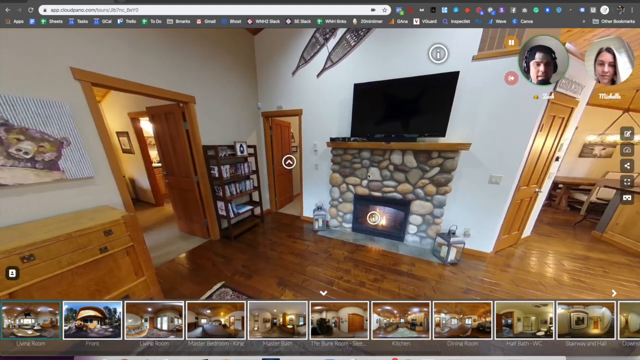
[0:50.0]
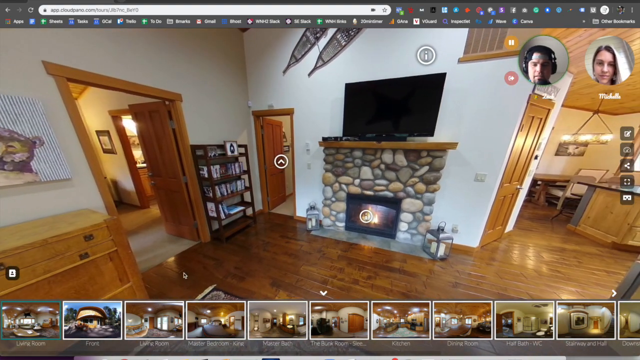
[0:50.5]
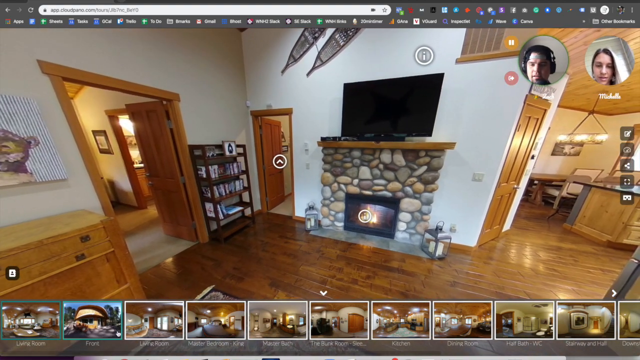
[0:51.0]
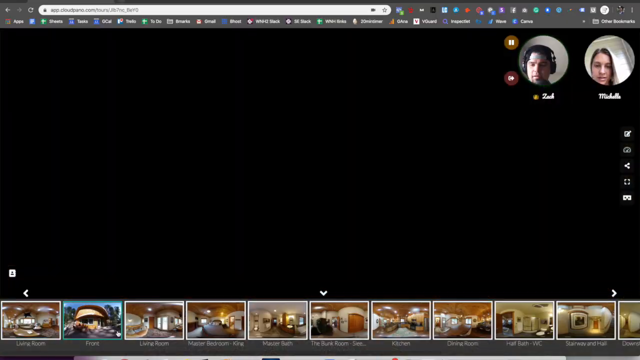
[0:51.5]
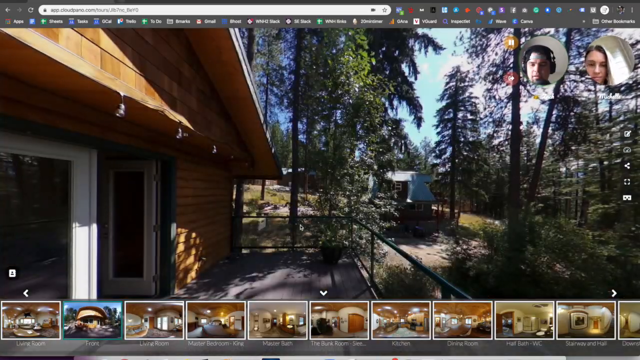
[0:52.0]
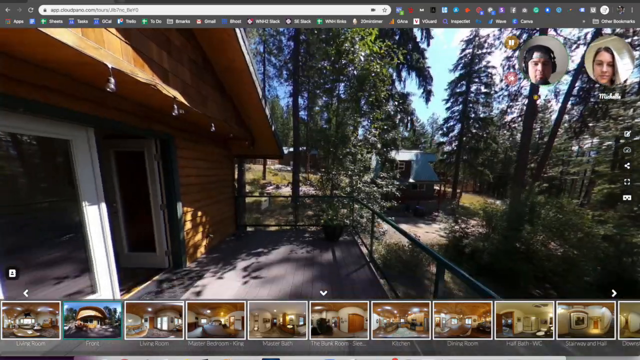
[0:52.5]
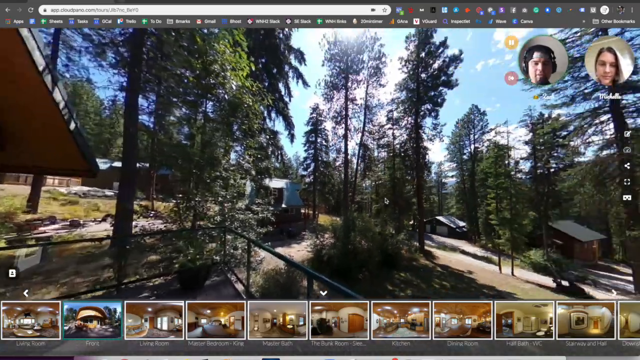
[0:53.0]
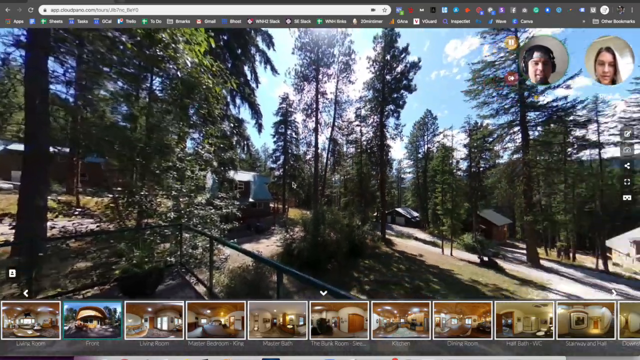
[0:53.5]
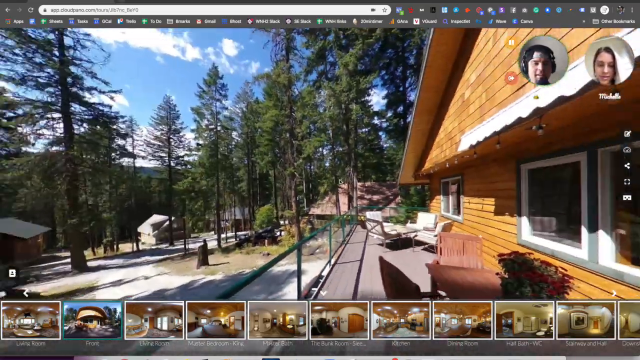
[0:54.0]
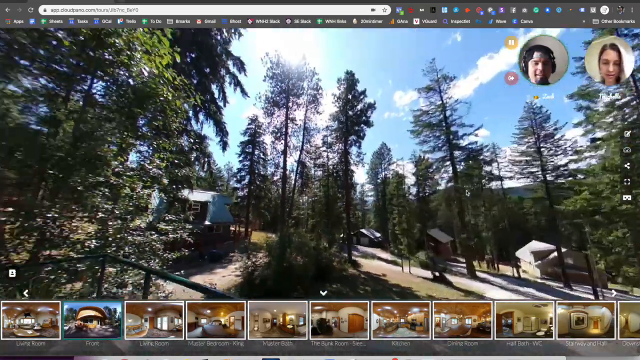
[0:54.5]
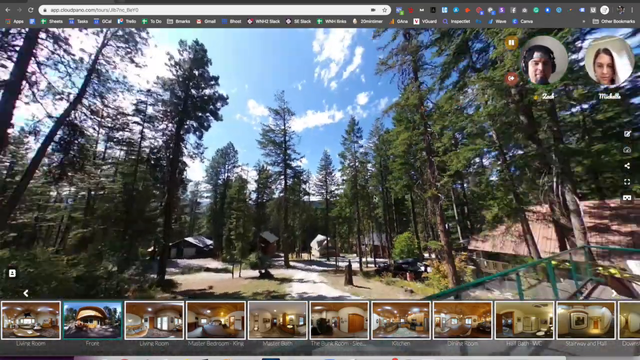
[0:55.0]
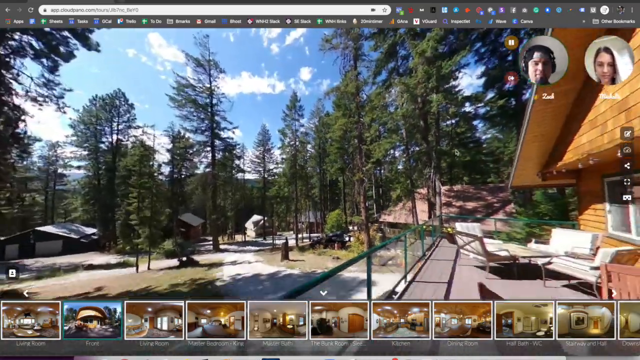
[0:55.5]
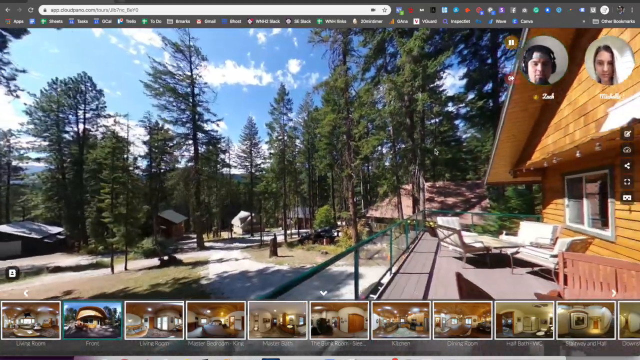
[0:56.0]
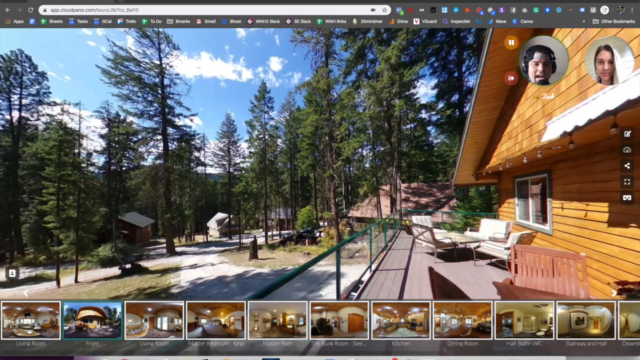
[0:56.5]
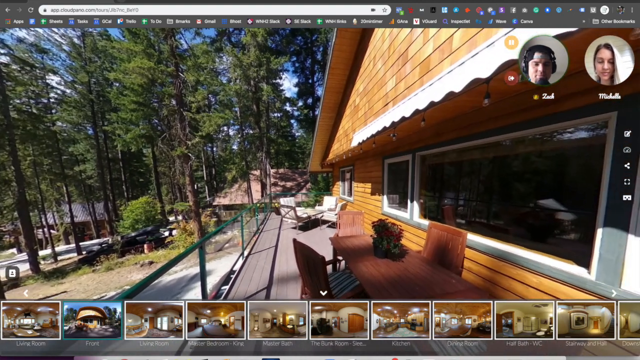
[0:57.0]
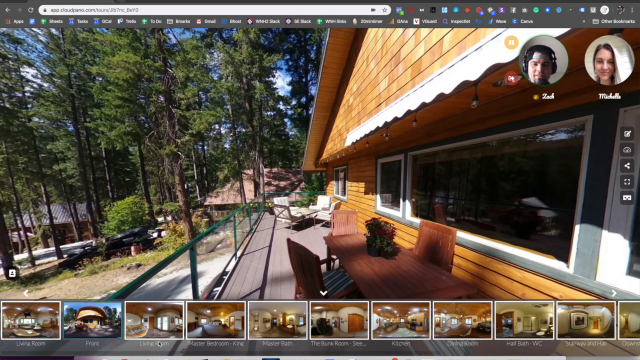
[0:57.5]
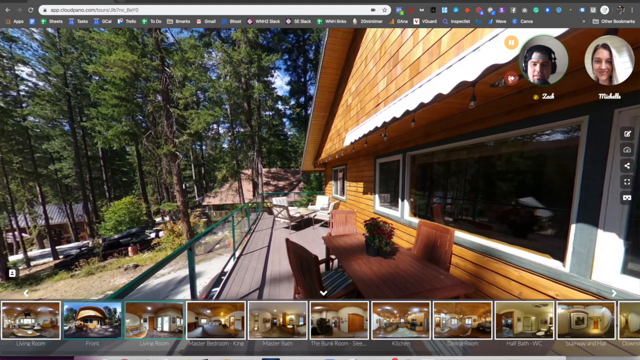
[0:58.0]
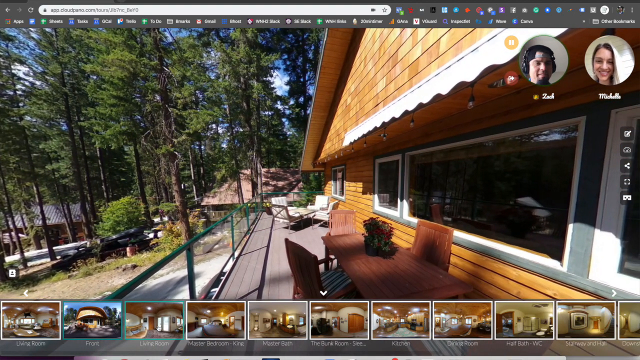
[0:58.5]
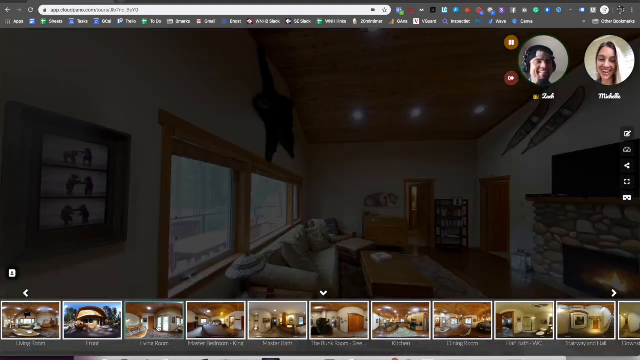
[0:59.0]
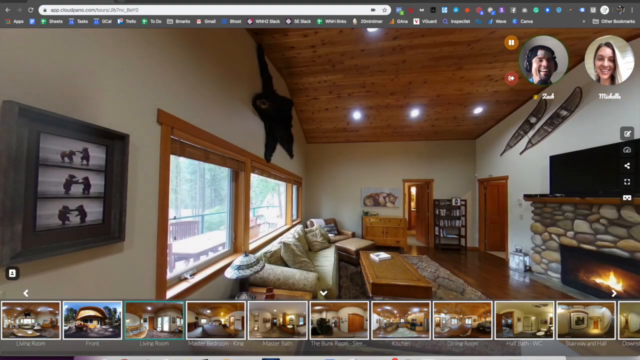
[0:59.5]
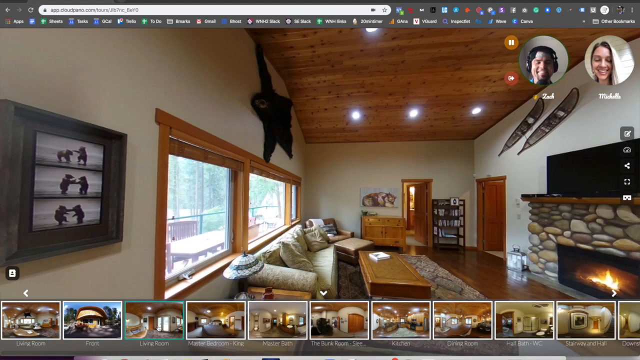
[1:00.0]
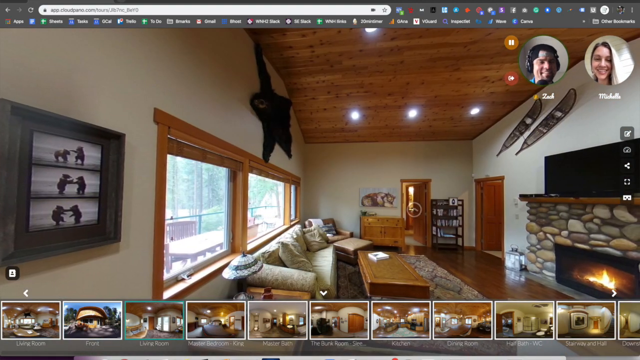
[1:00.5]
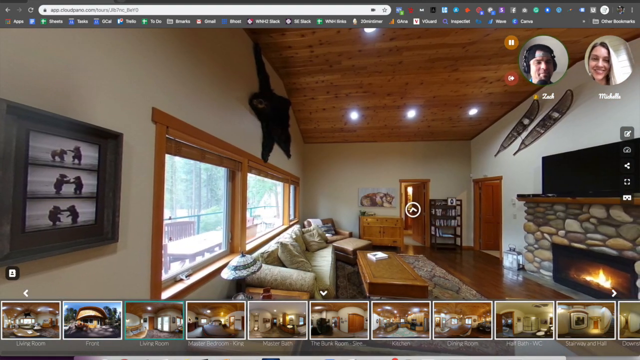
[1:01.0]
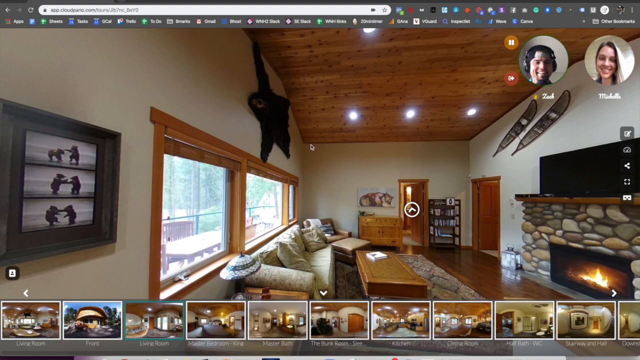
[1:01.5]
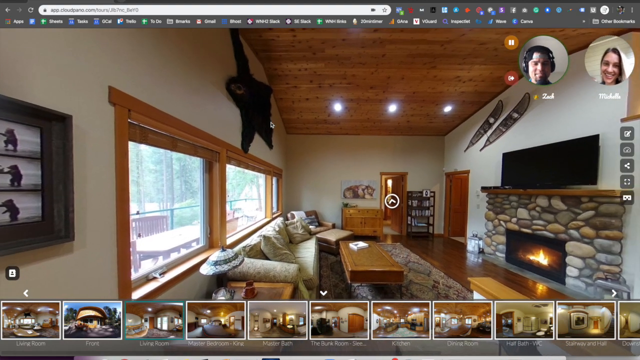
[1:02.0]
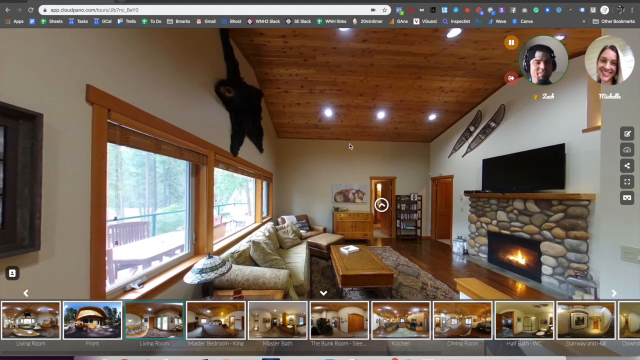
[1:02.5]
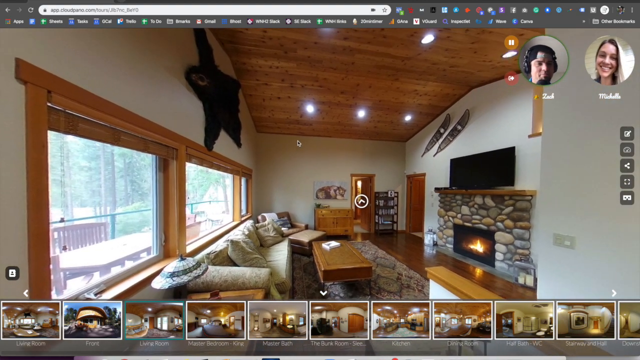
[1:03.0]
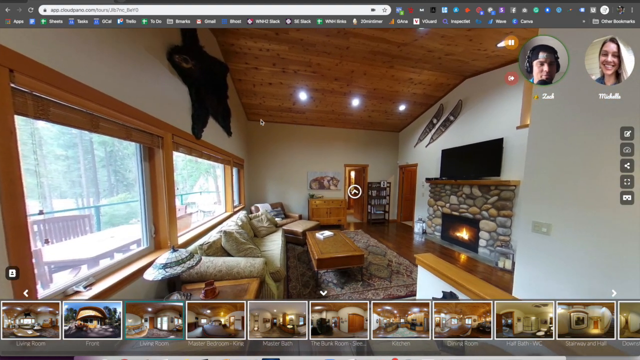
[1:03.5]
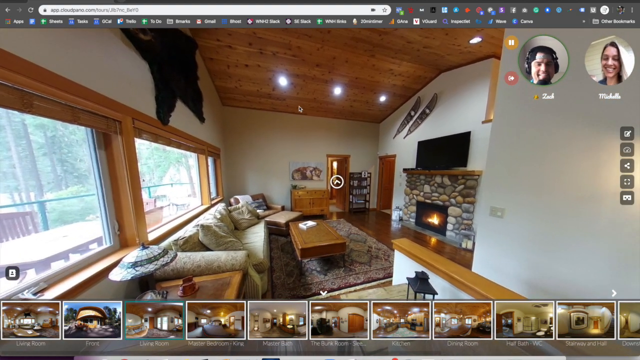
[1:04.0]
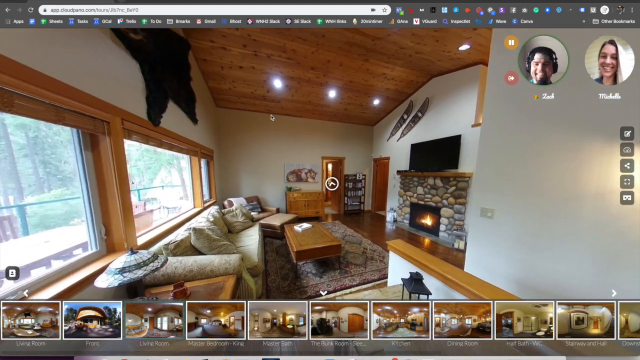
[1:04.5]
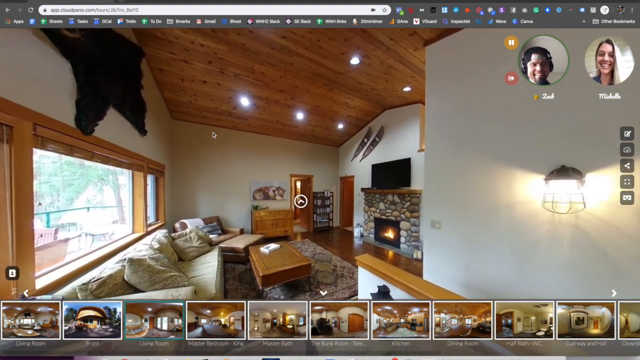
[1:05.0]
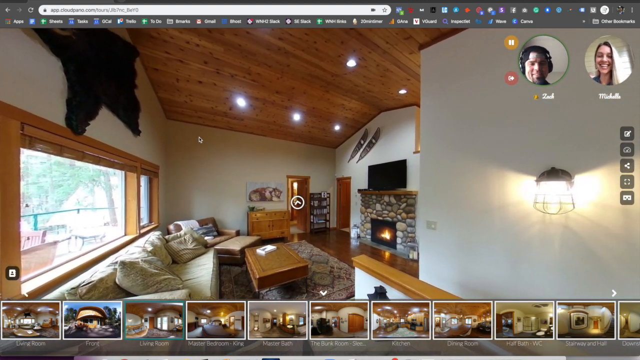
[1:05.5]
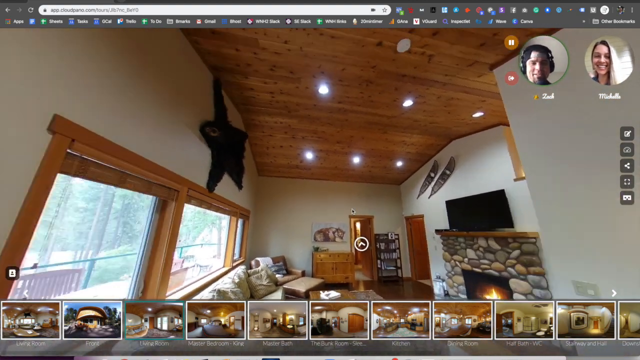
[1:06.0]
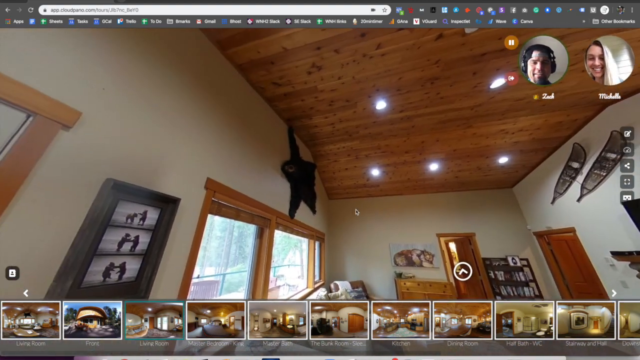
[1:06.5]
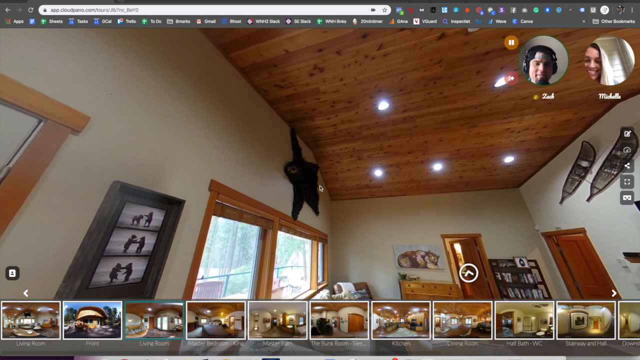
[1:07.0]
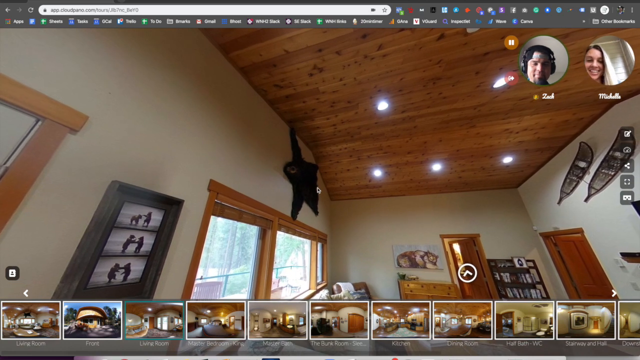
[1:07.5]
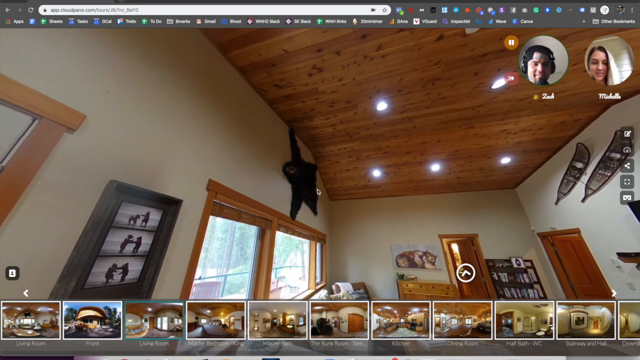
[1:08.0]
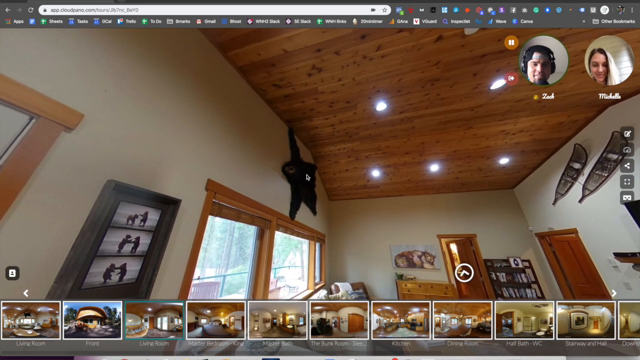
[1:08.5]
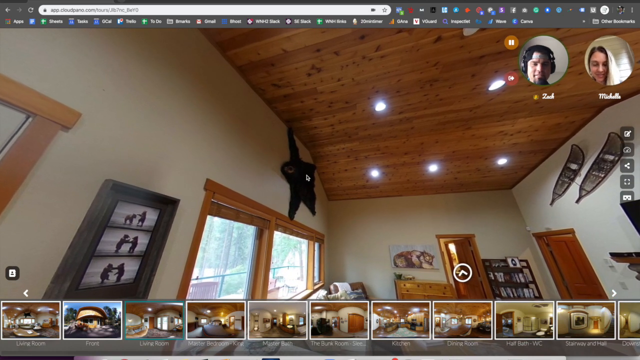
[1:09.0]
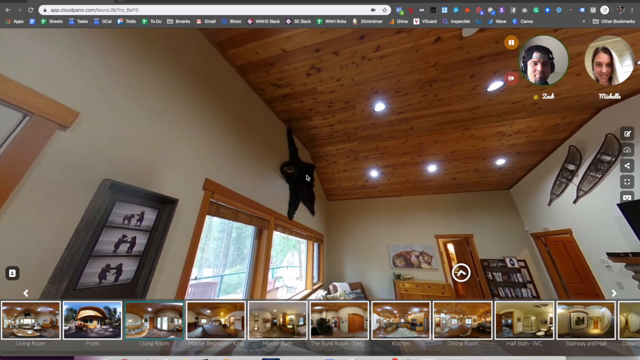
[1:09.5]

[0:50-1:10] Two players are in a virtual reality setting inside a house that is up in the pine trees. The view goes outside, showing a few neighbors in the area, and it looks like it could be cold or wet outside. Inside, there is a bear skin on the wall and there are bear pictures on the wall. Outside there are a lot of pine trees, a blue sky and some clouds. The ceiling inside has a lot of recessed lights shining down, and most of the furniture is also wooden. Toward the middle, between two doors, there is kind of a rack with about three or possibly four shelves holding either books or video games.